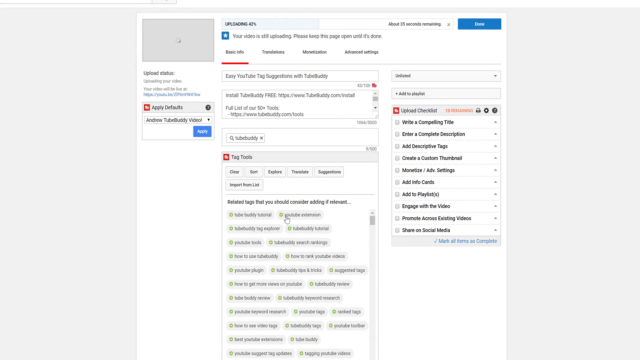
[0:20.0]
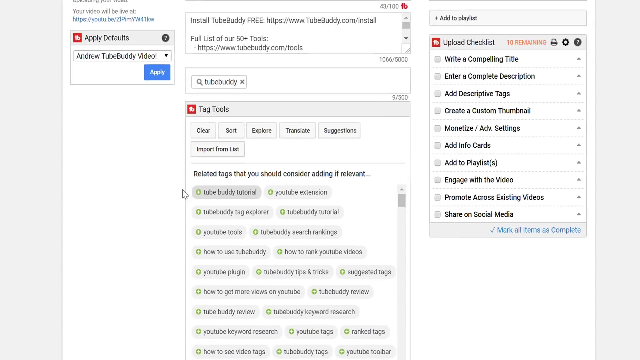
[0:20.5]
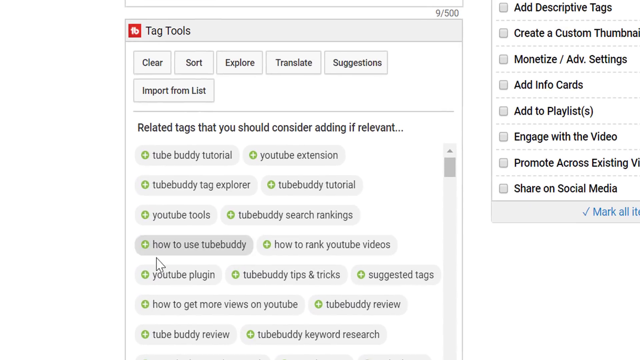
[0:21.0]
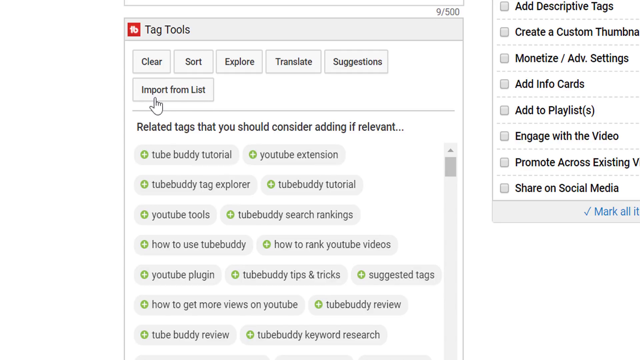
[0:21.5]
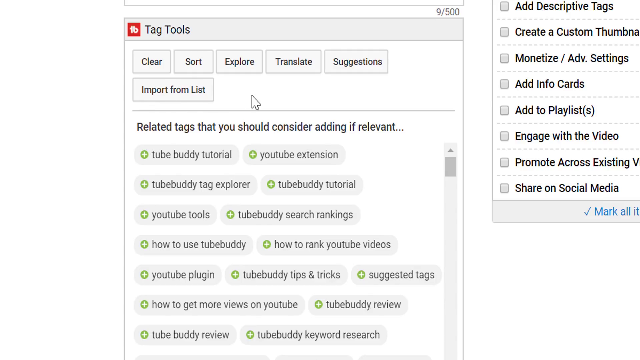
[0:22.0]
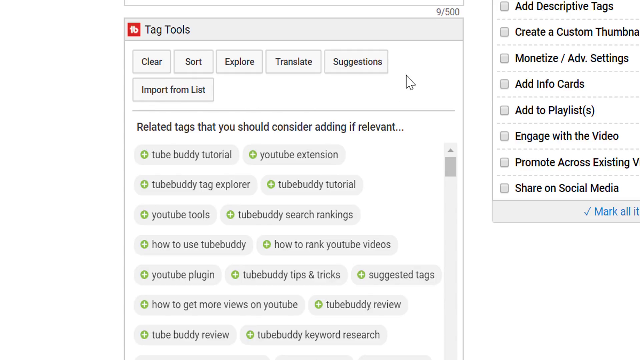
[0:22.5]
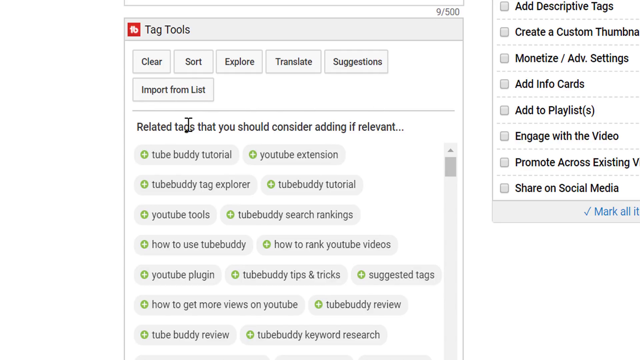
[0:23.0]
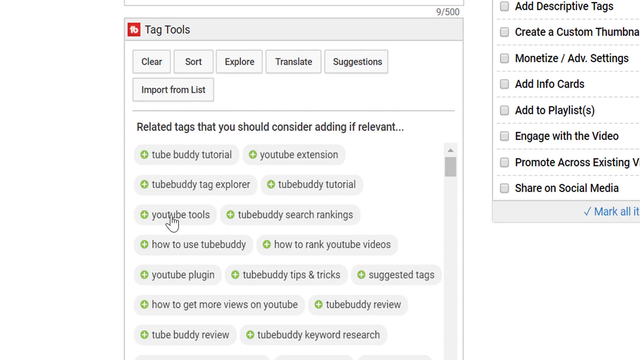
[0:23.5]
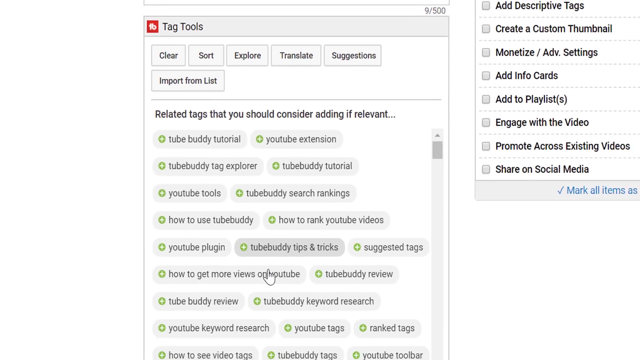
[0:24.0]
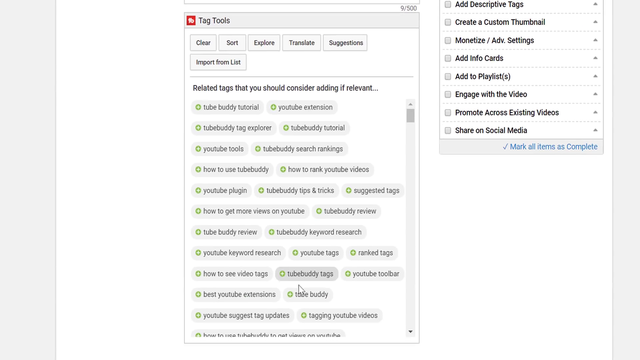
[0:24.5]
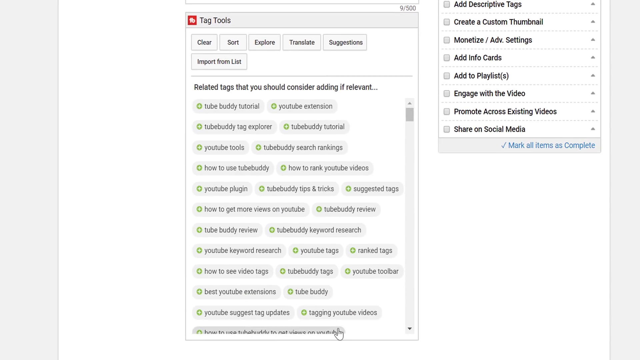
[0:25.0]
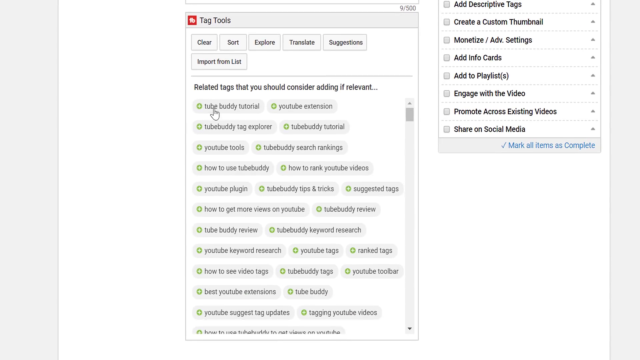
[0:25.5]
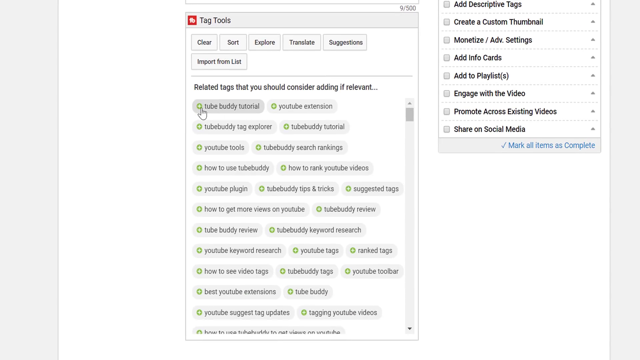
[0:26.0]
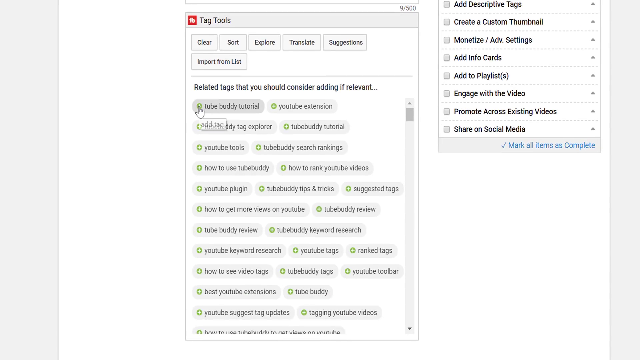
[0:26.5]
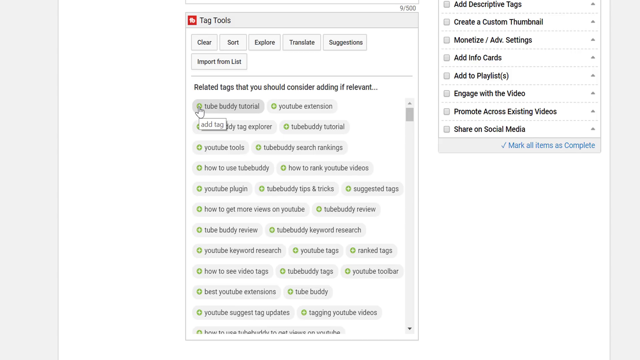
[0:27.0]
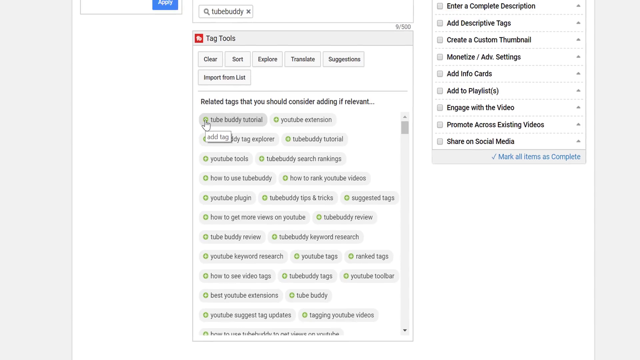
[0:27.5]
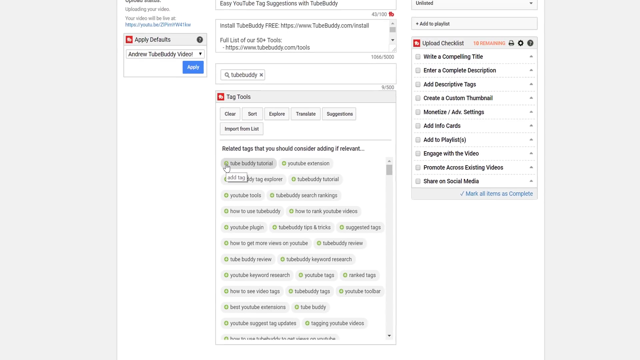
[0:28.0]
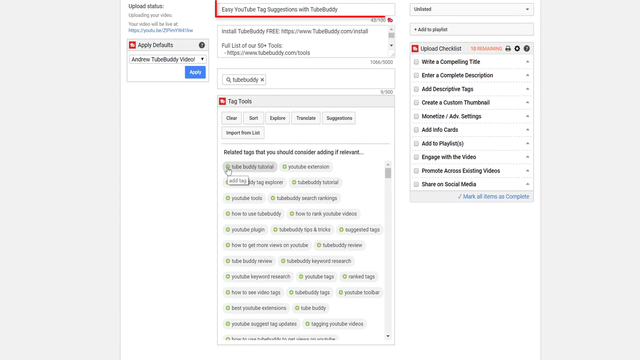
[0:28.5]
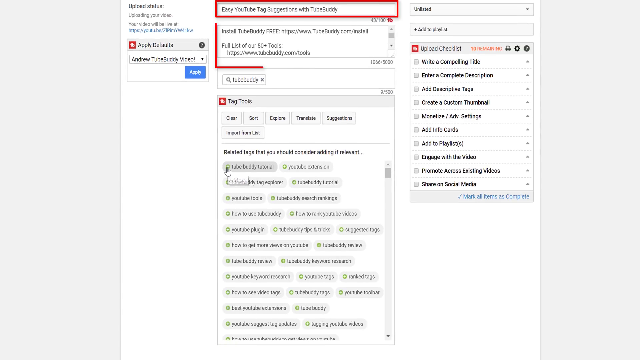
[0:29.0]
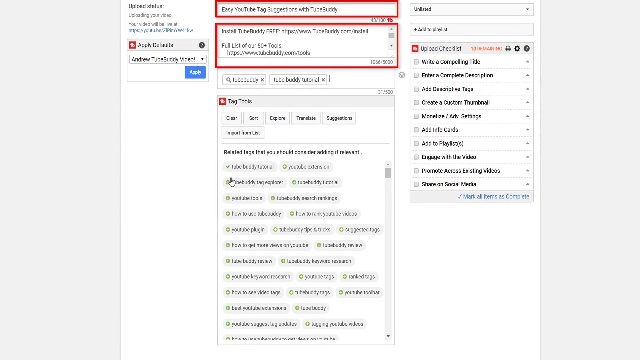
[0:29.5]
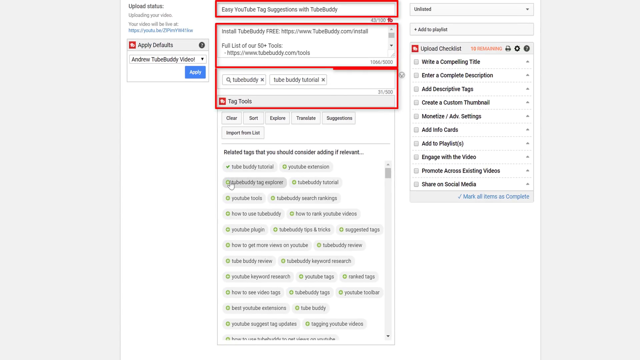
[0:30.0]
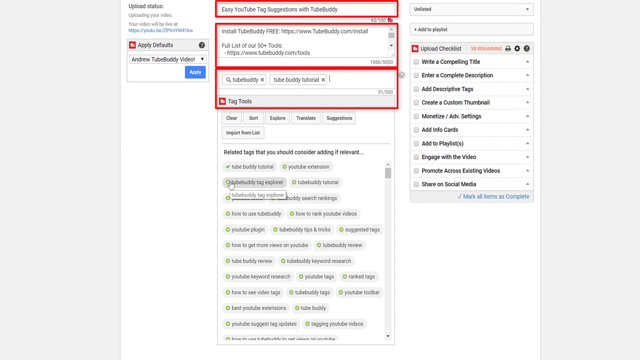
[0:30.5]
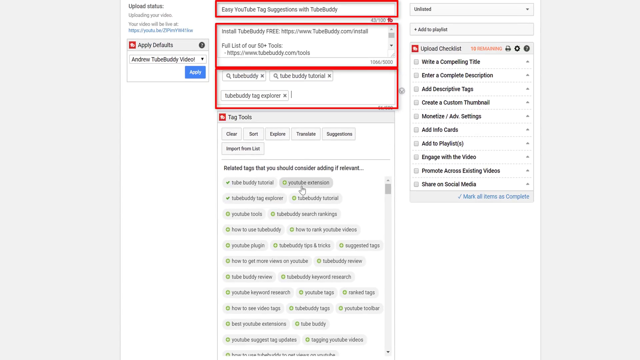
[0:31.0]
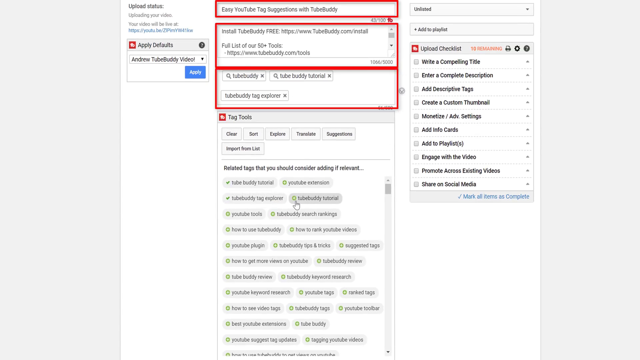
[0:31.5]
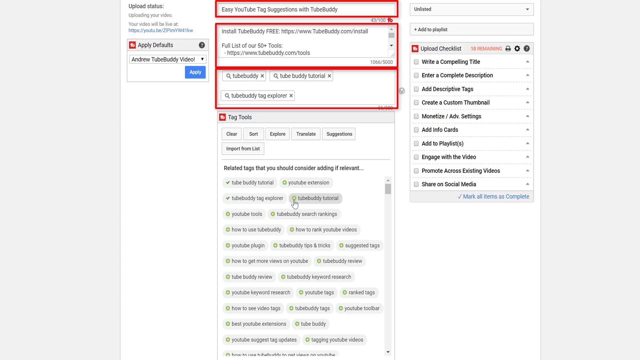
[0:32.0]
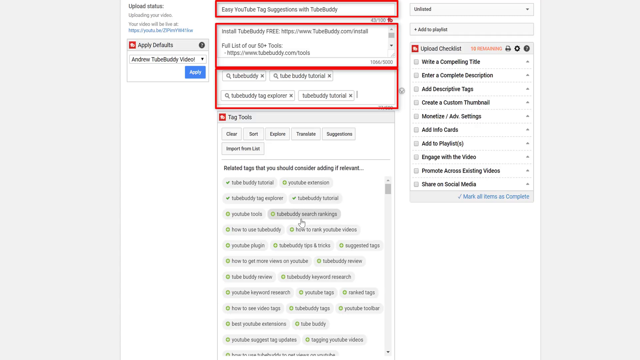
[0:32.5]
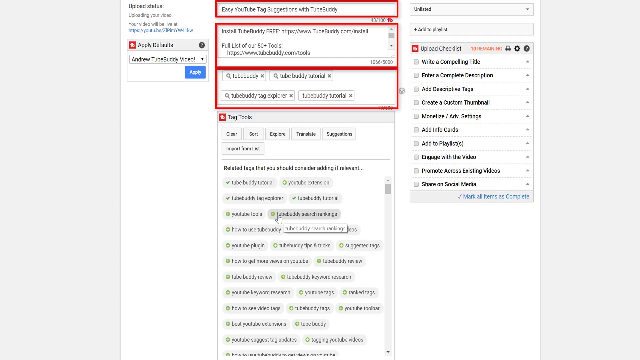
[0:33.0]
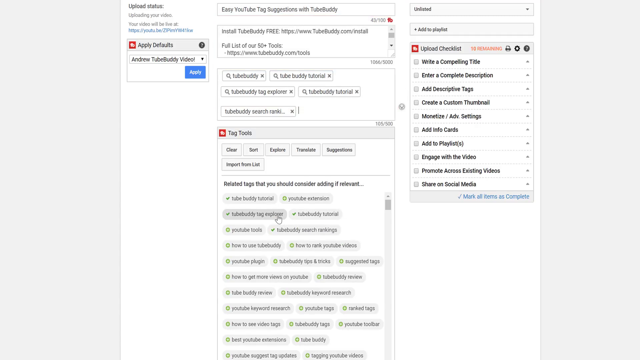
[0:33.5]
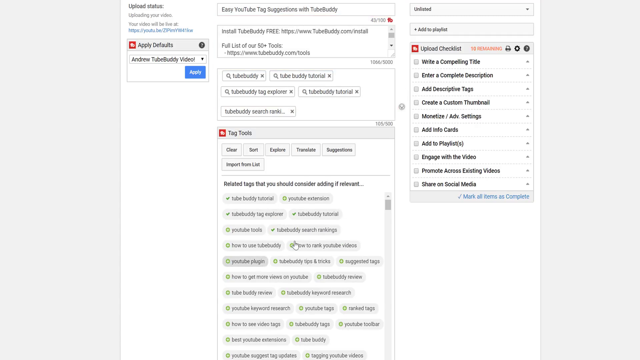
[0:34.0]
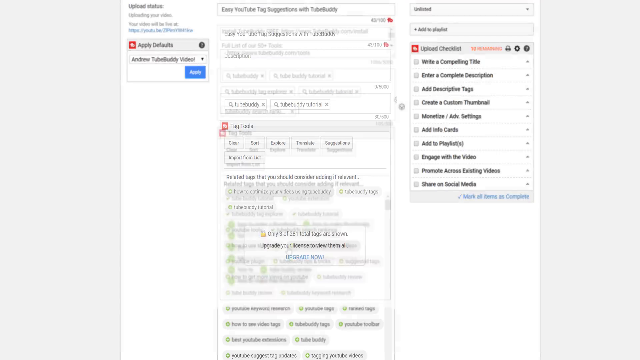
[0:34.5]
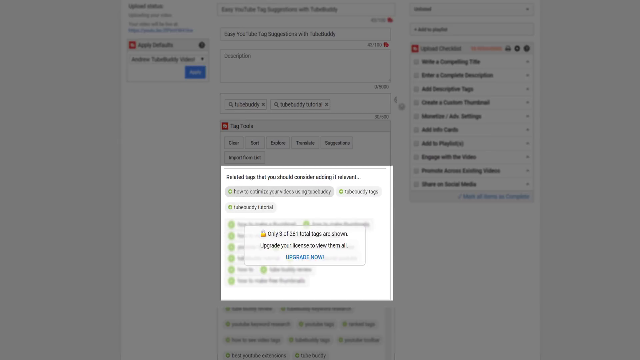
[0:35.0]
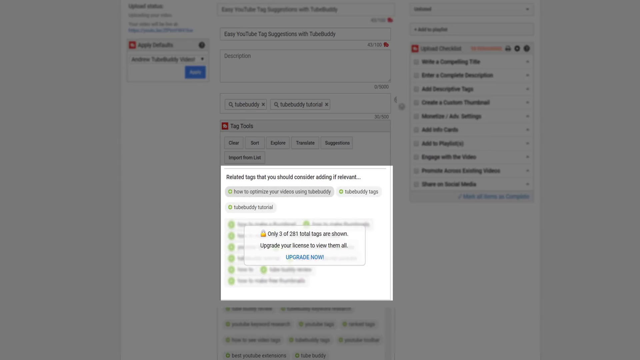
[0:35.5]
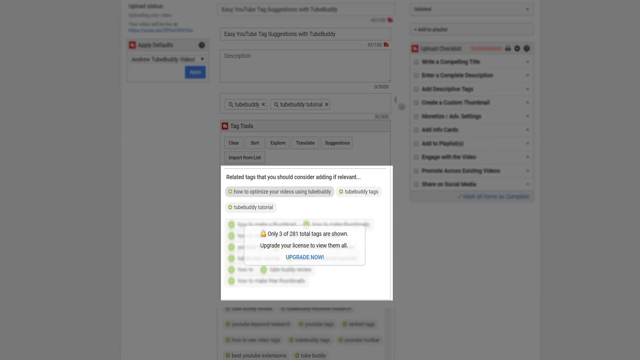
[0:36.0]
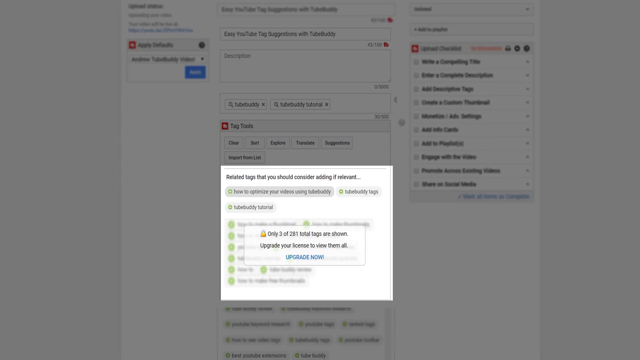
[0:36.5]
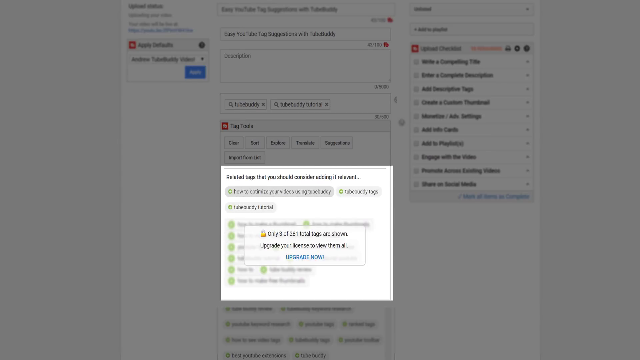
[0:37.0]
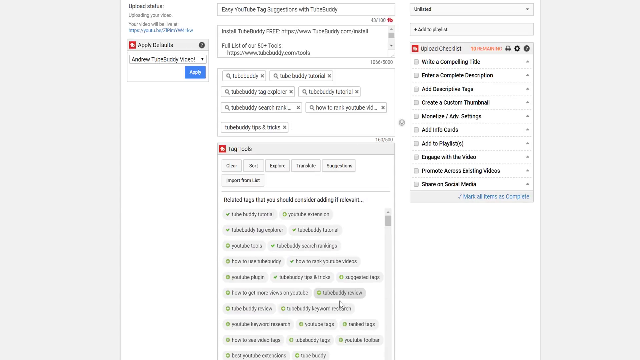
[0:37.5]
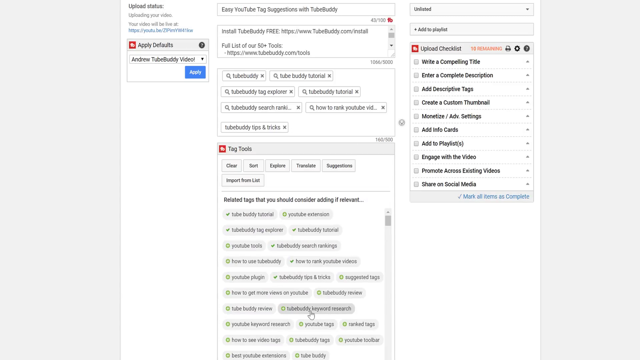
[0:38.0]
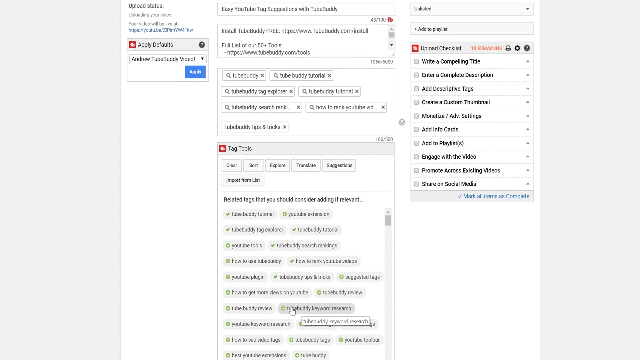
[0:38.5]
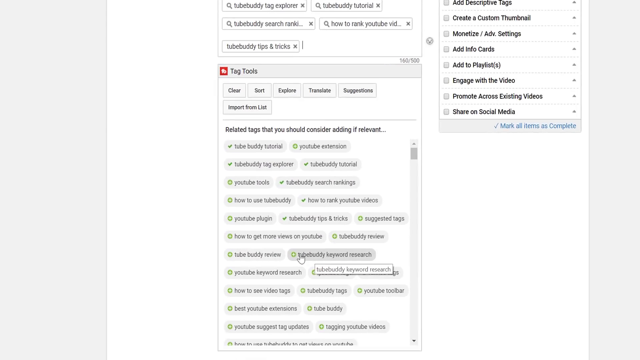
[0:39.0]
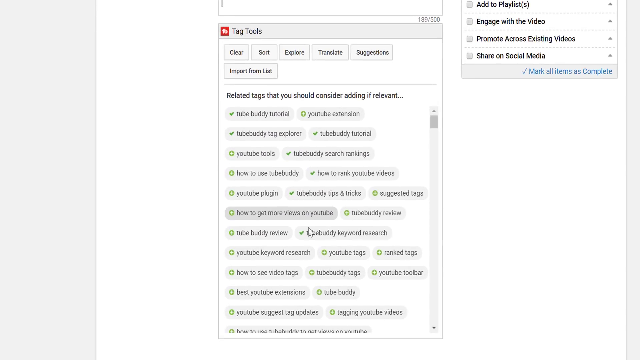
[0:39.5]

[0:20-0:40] The screenshot zooms in quite a lot, revealing some of its content. There is a tag tool with a clear button, a sort button, an explore button, a translate button, a suggestions button and an import from list button, along with various related tags that could be added. On the right-hand side are various check boxes with different wordings, such as "add info cards" or "add the playlist". The screen zooms out slightly to give a better view of all the tags, then zooms out again. Two sections are highlighted with red boxes, then another section is also highlighted in a red box, and some tags are added into that section. A slightly blurred pop-up appears. The view then zooms into the tags screen.